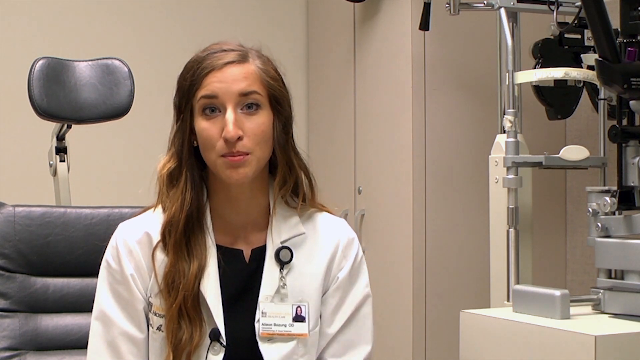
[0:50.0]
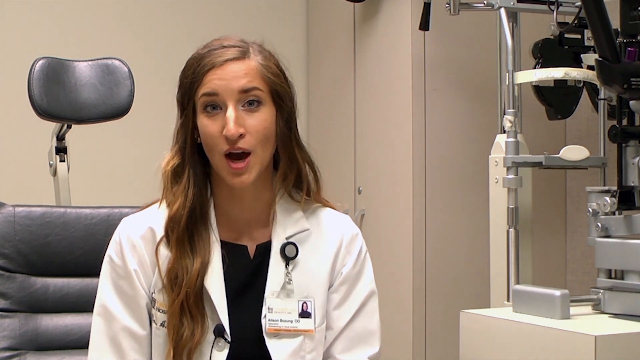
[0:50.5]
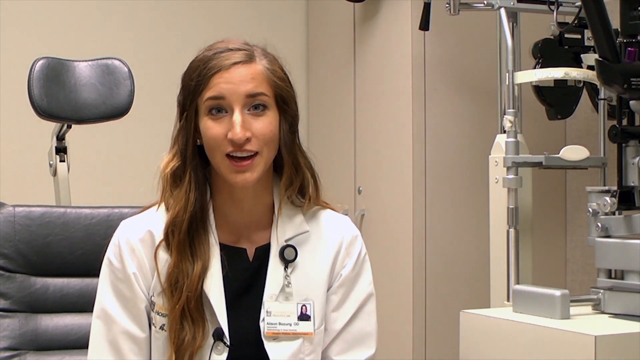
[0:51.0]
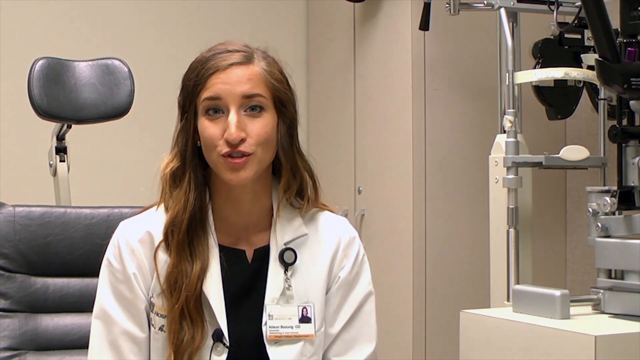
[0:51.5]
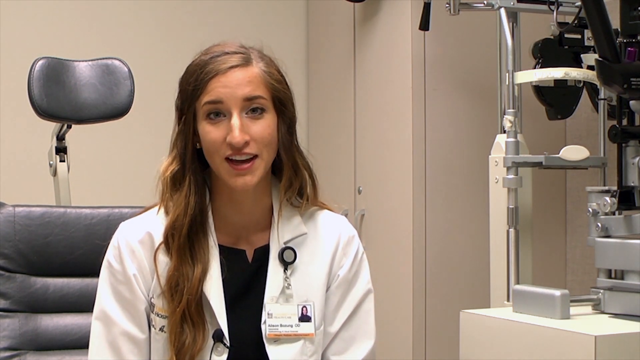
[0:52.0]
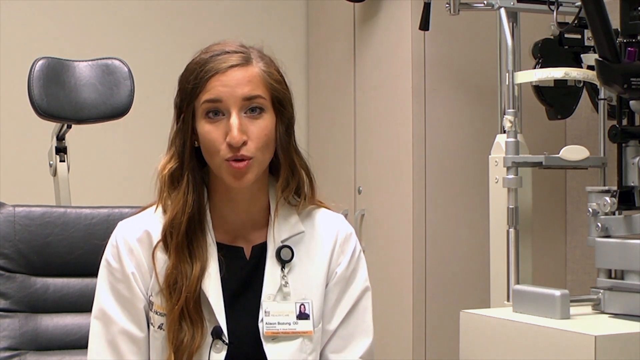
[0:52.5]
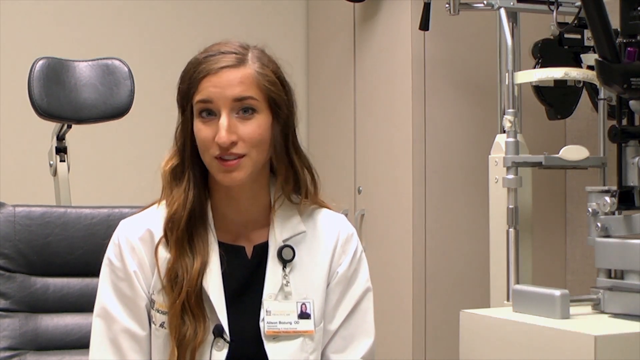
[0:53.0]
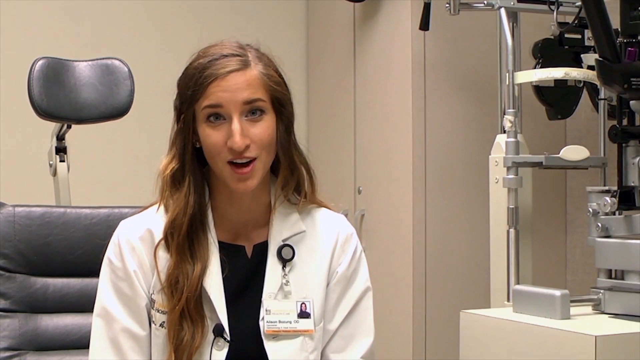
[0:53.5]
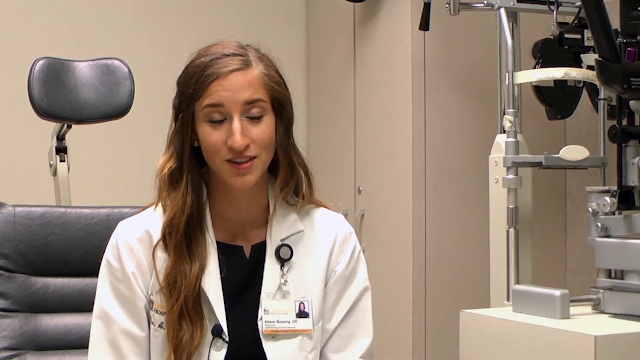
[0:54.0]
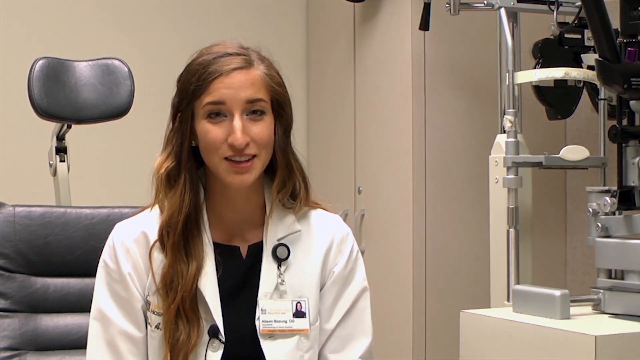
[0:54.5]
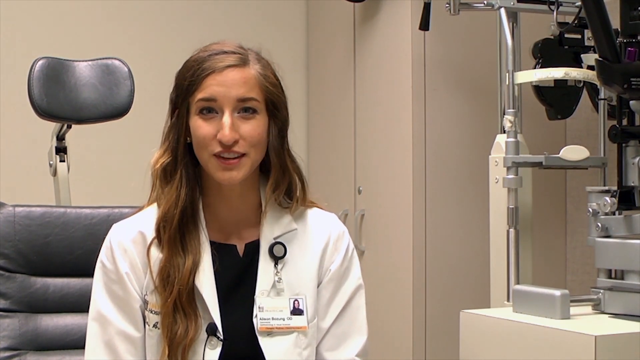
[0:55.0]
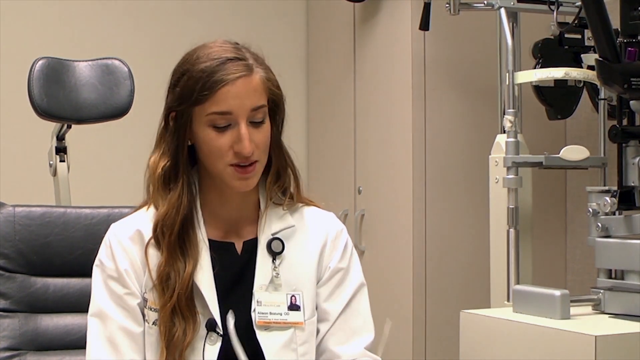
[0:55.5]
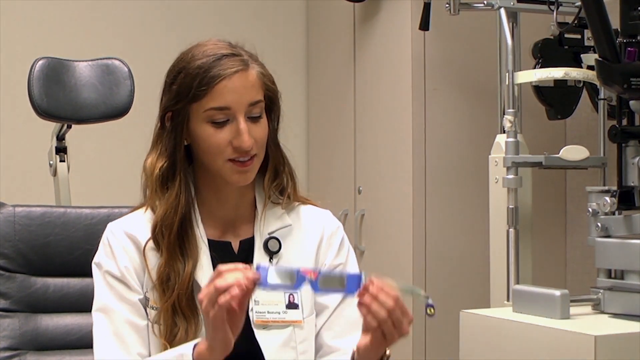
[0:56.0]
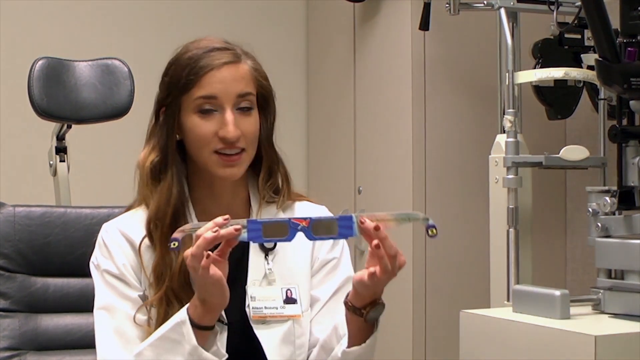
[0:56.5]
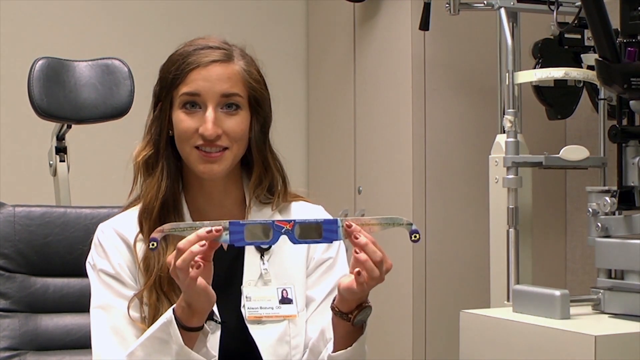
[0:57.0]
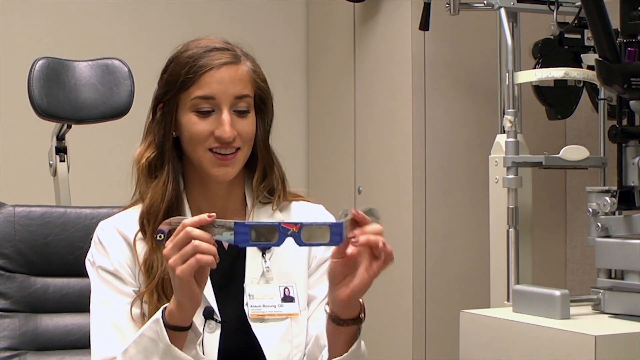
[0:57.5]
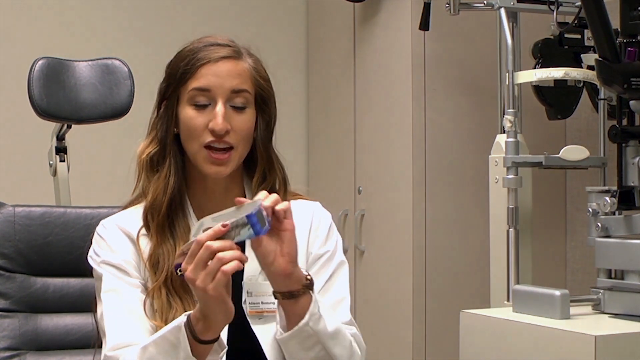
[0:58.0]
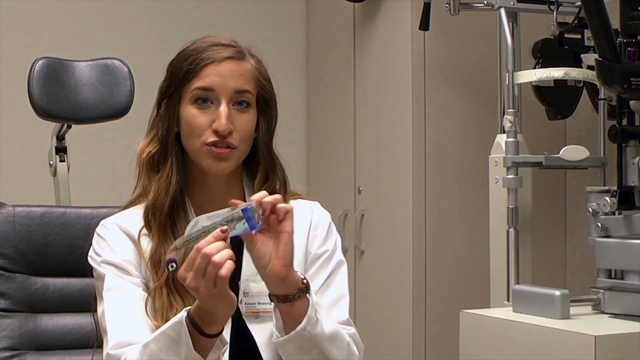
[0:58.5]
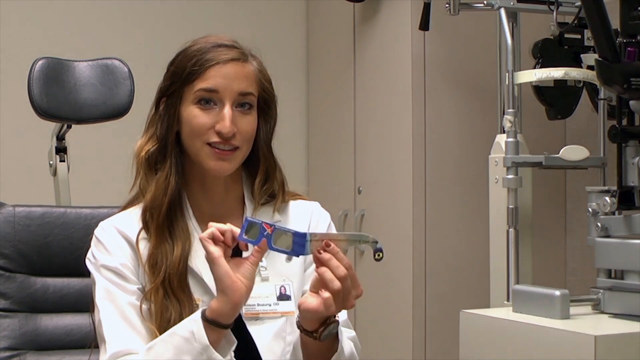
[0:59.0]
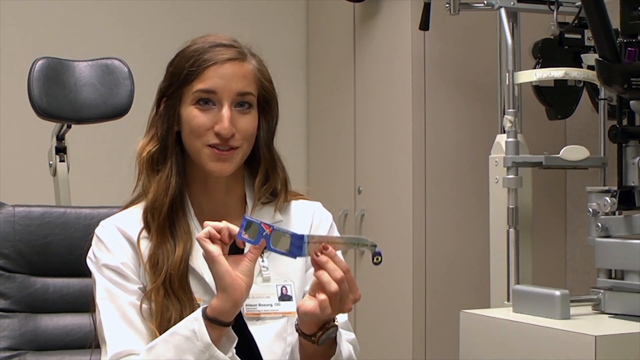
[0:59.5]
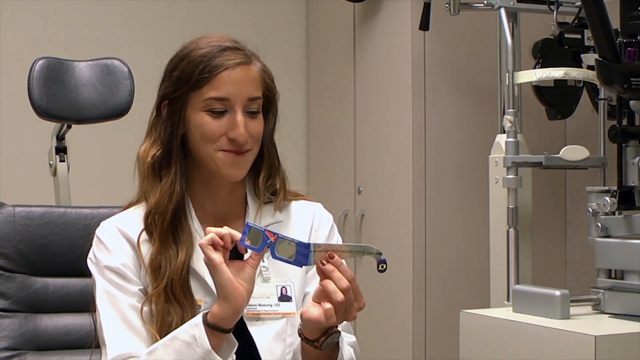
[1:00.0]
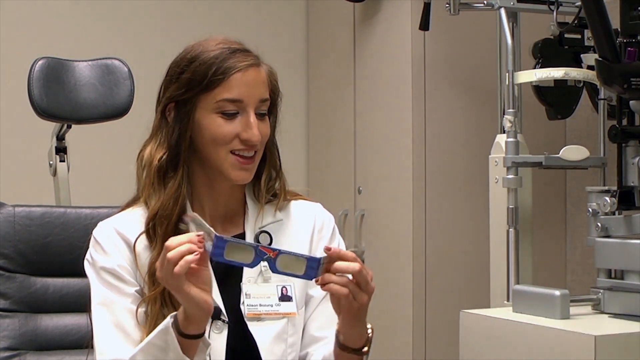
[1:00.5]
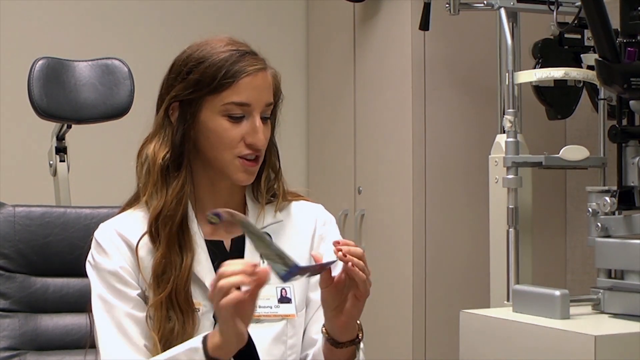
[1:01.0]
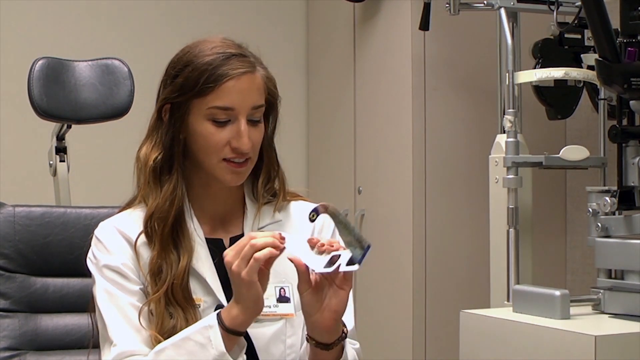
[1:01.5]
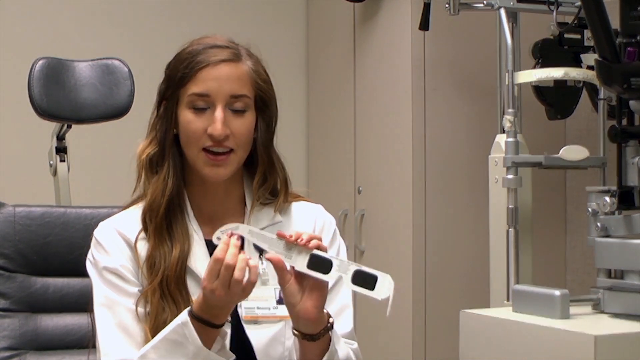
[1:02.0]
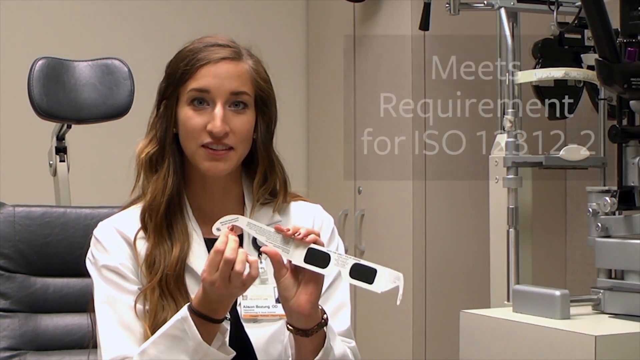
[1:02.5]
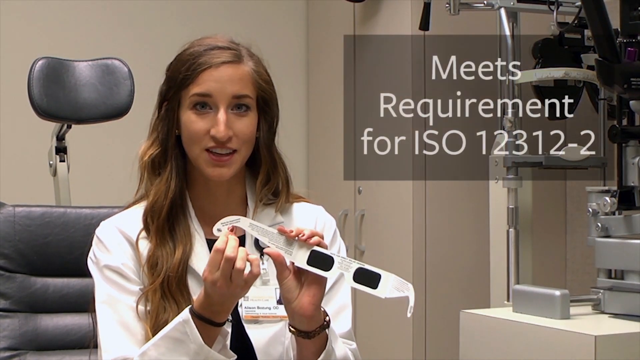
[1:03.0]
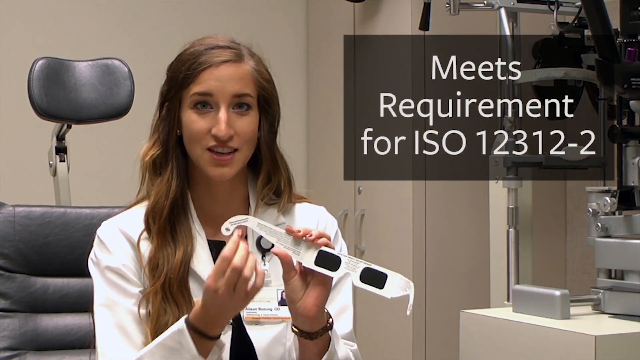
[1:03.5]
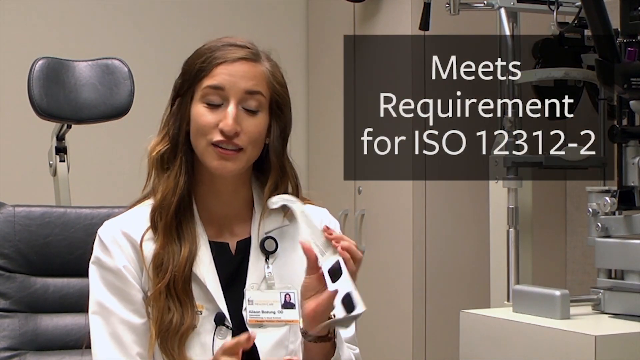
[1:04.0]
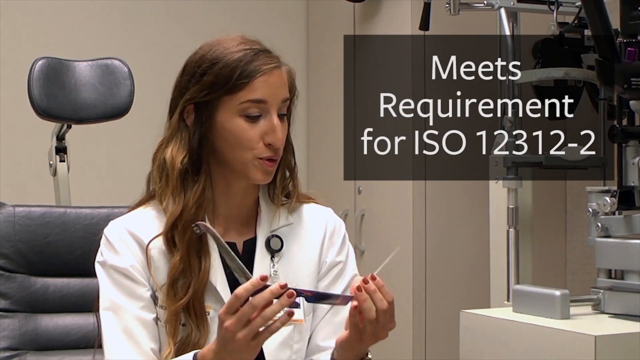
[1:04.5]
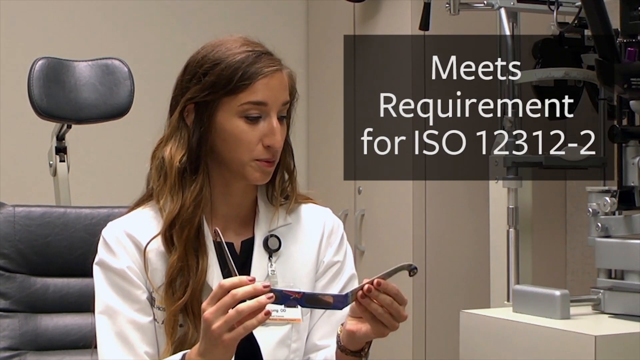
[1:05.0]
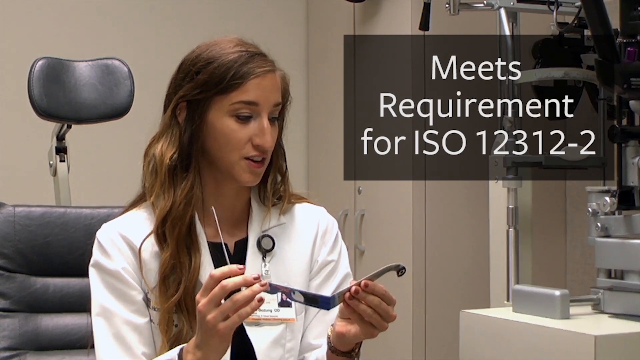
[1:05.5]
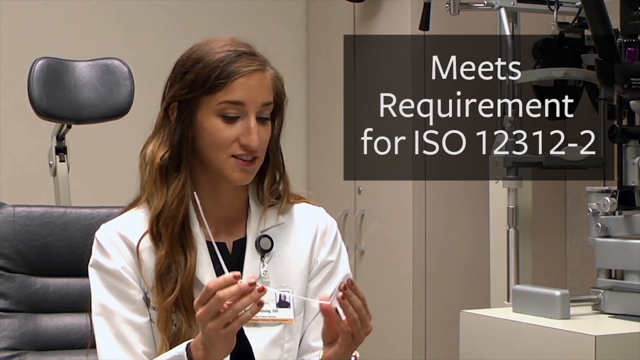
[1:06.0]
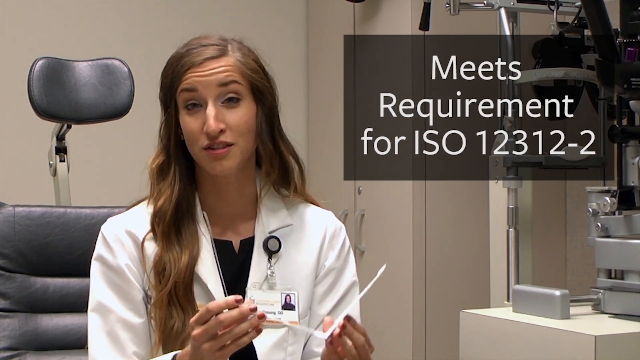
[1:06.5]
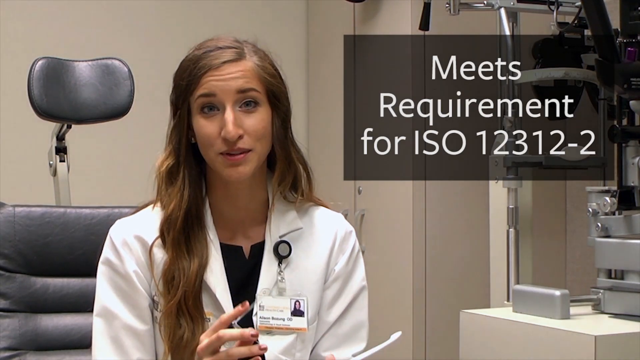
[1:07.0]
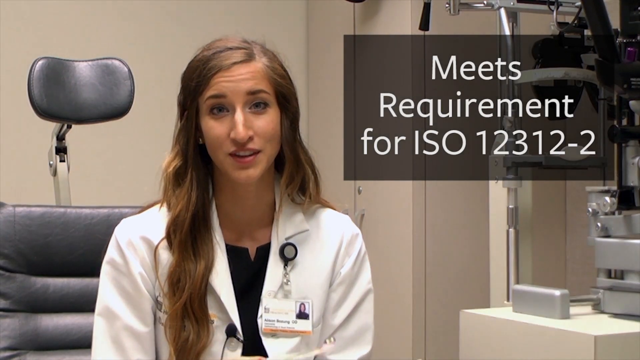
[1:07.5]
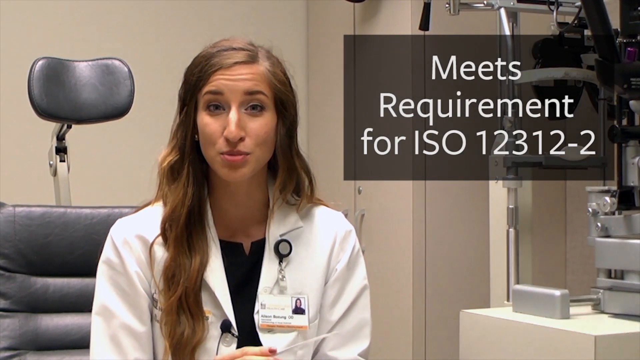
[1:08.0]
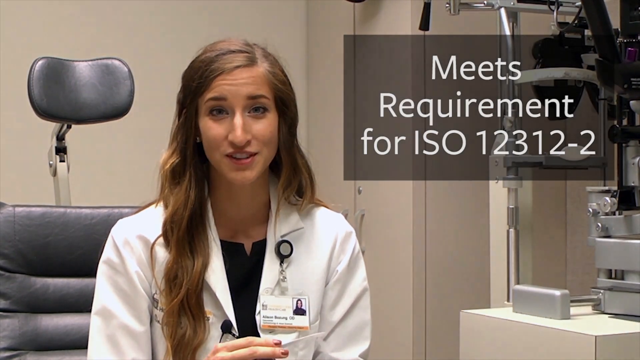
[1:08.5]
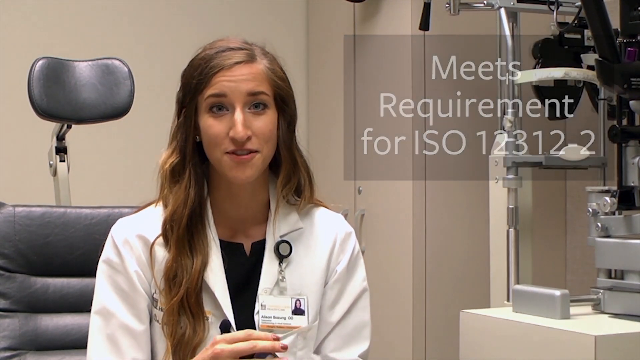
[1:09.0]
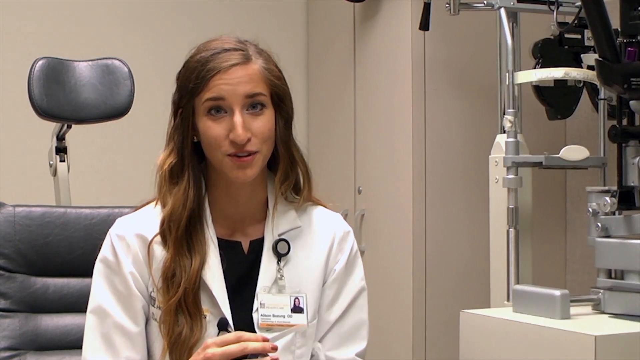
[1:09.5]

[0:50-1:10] A female ophthalmologist is seated in an exam chair facing the viewer, talking to the camera. Her long, wavy, light brown hair is parted on the left side and combed over to the right, draping over her right shoulder in the front and behind her left shoulder in the back. The exam chair is black leather with an adjustable headrest on top. Smiling, she talks animatedly, then holds up with both hands a pair of cardboard glasses for looking at eclipses. The armbands of the glasses are off-white with little black text on them, the front is blue, and the lenses are a dark tinted charcoal black. She has burgundy nail polish on her fingernails and wears a large-faced watch with a brown band on her left wrist. She folds the sides of the glasses in and turns them from side to side, examining them as she talks about them.